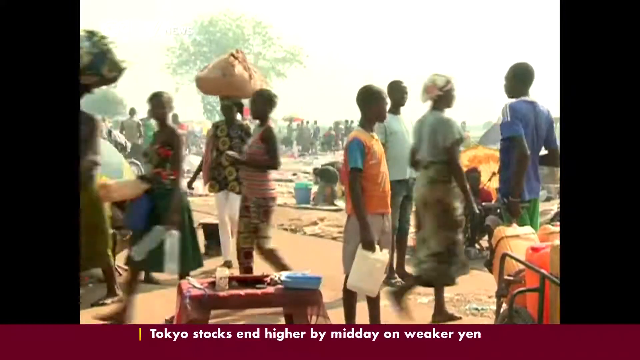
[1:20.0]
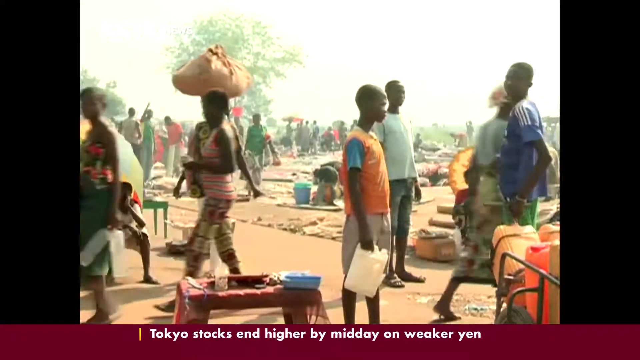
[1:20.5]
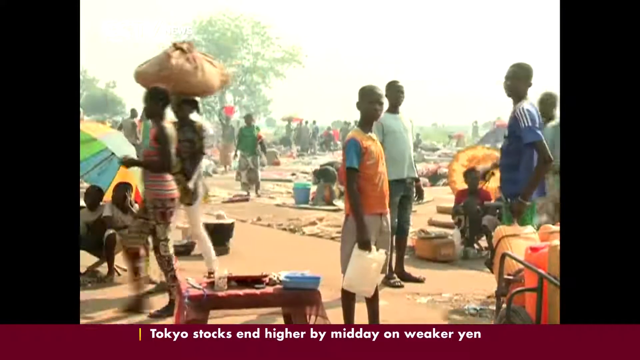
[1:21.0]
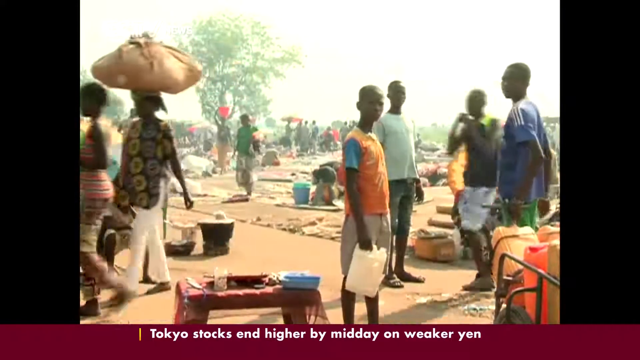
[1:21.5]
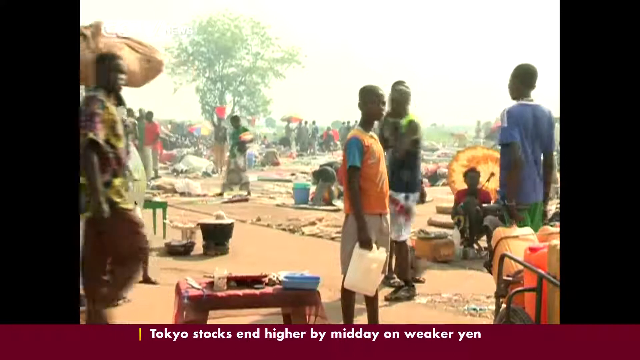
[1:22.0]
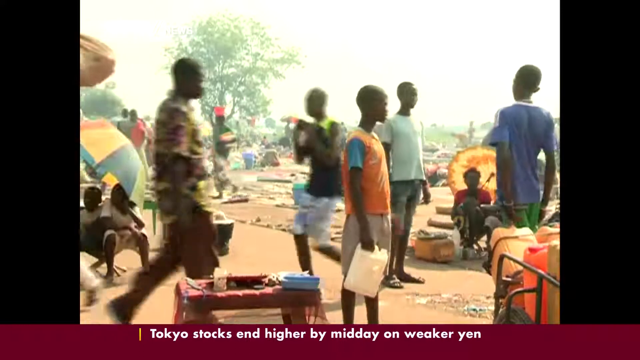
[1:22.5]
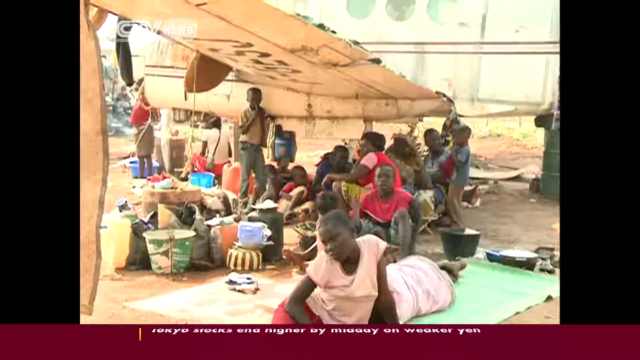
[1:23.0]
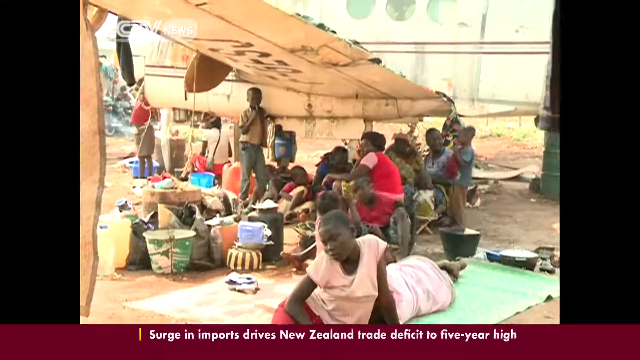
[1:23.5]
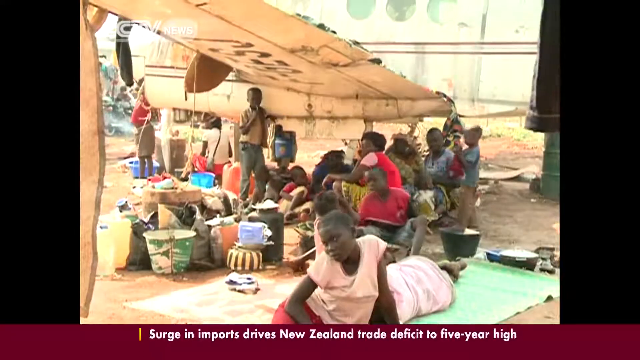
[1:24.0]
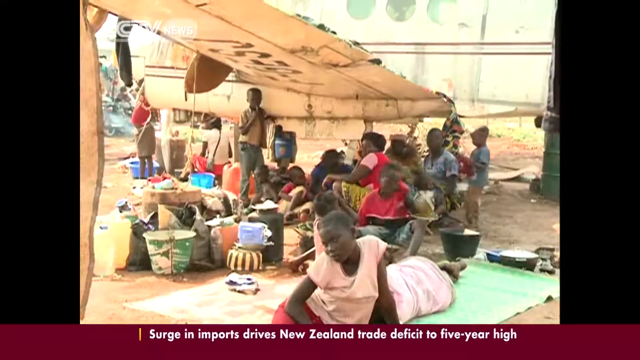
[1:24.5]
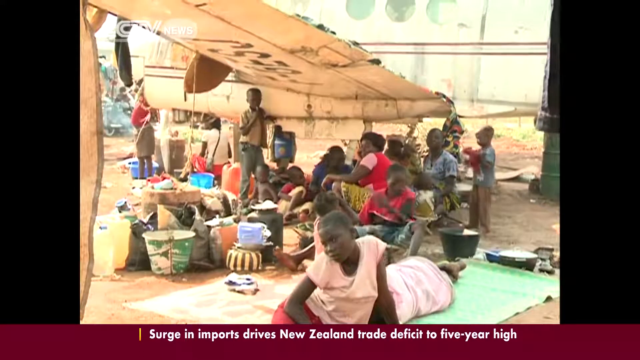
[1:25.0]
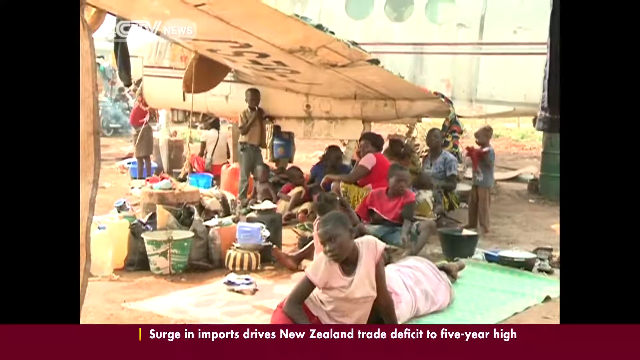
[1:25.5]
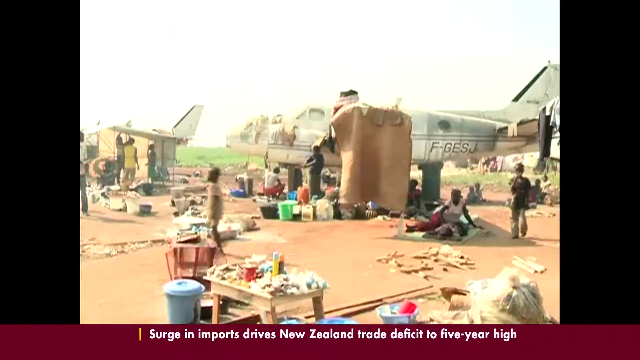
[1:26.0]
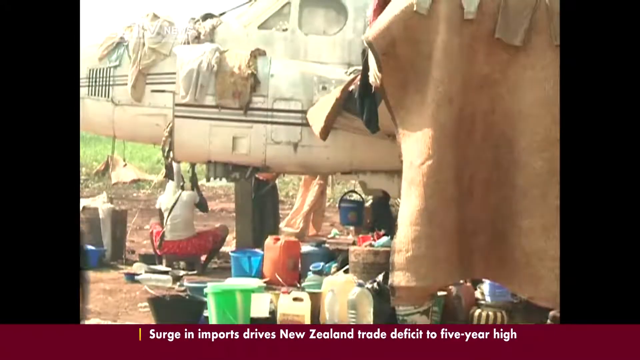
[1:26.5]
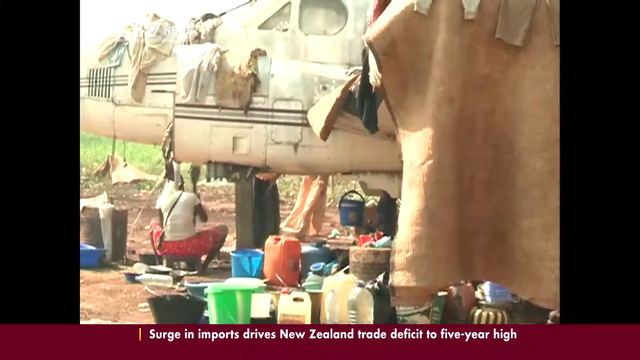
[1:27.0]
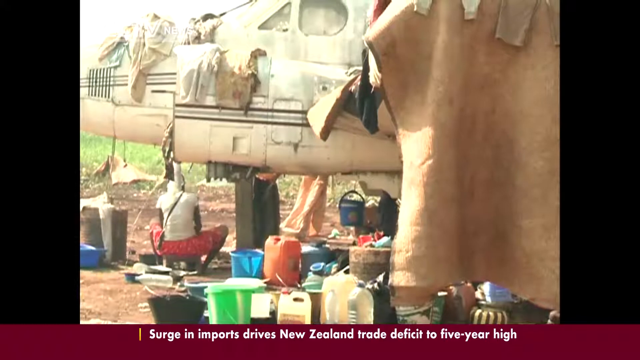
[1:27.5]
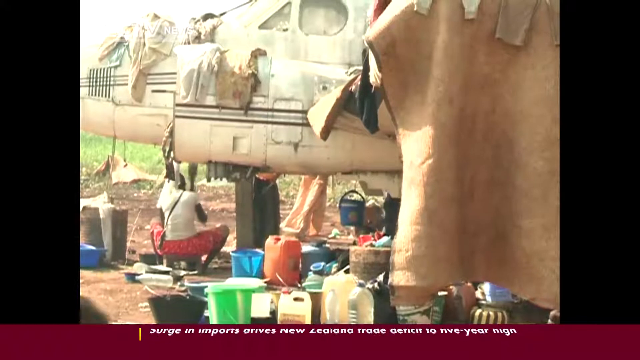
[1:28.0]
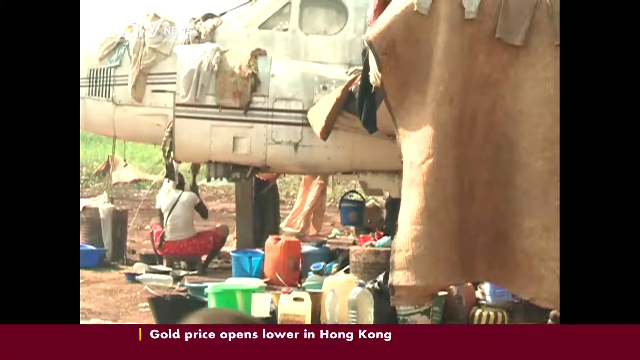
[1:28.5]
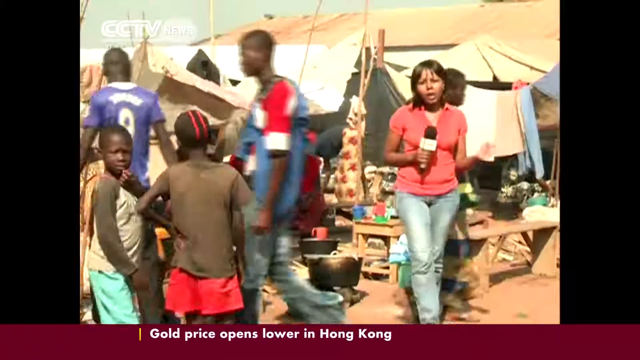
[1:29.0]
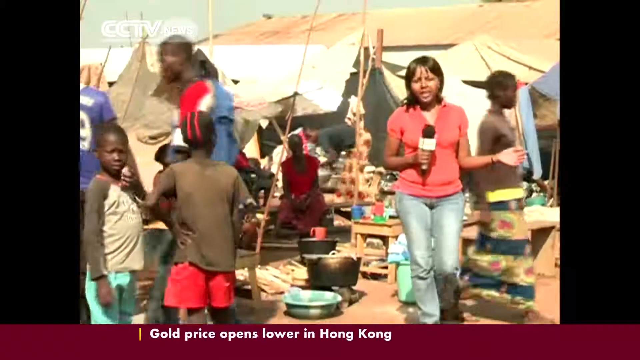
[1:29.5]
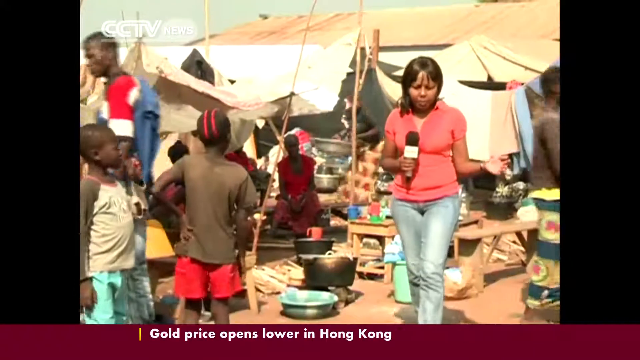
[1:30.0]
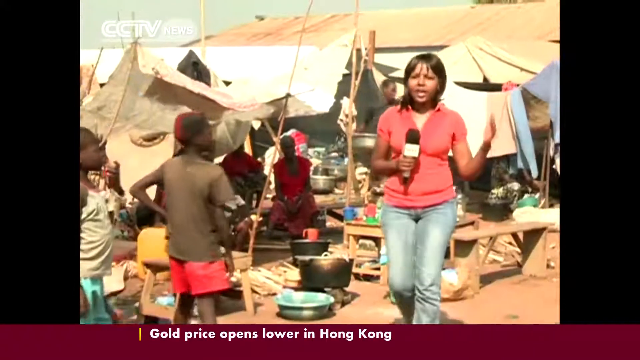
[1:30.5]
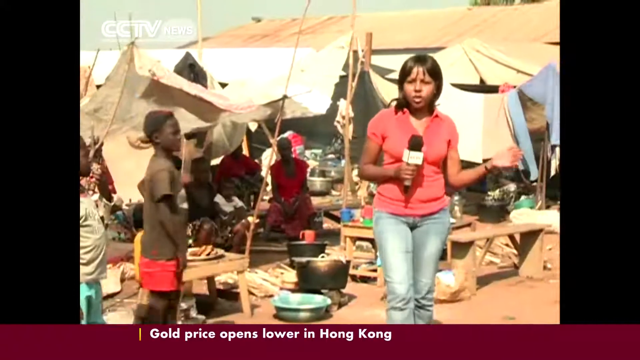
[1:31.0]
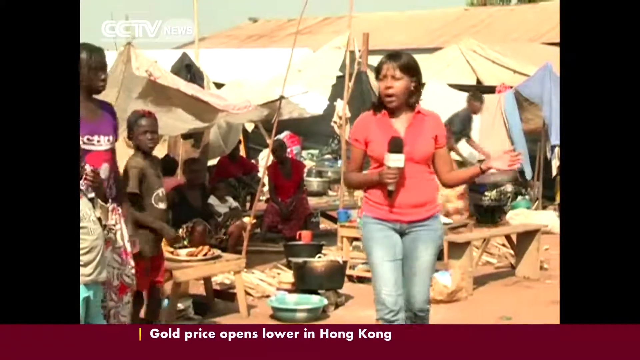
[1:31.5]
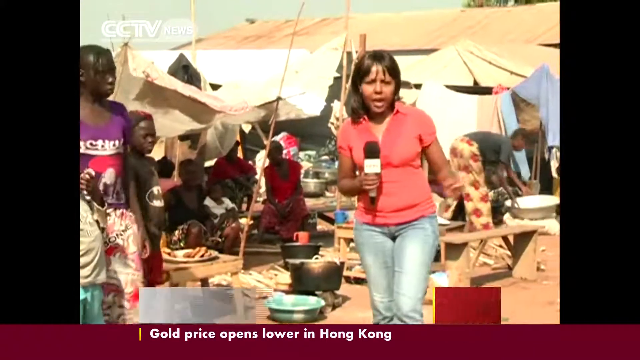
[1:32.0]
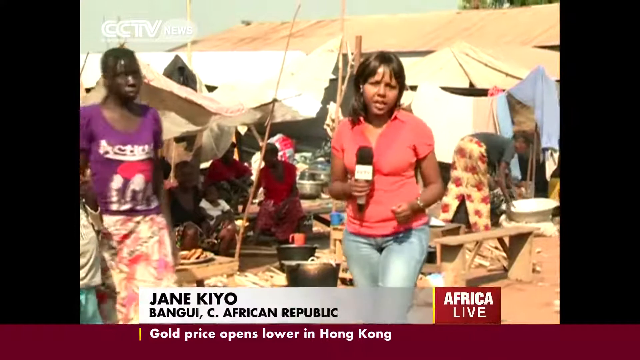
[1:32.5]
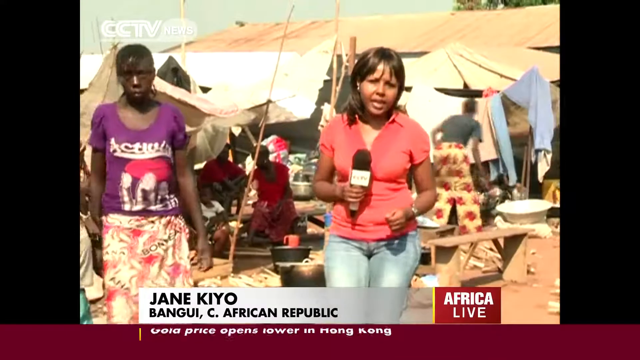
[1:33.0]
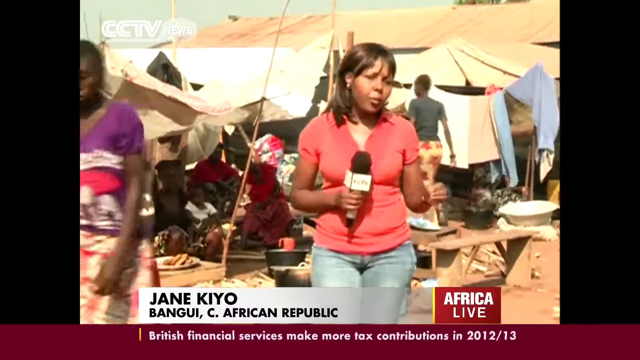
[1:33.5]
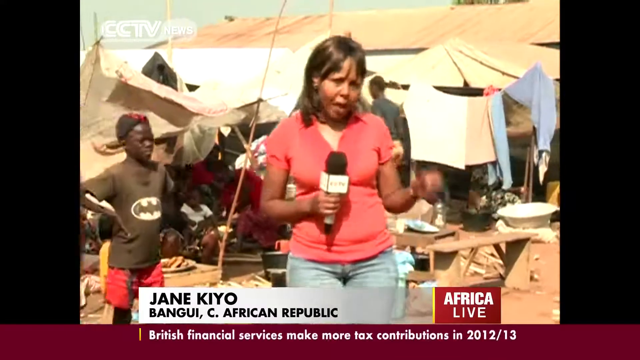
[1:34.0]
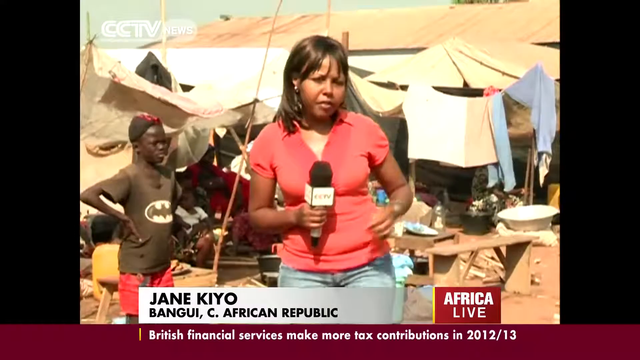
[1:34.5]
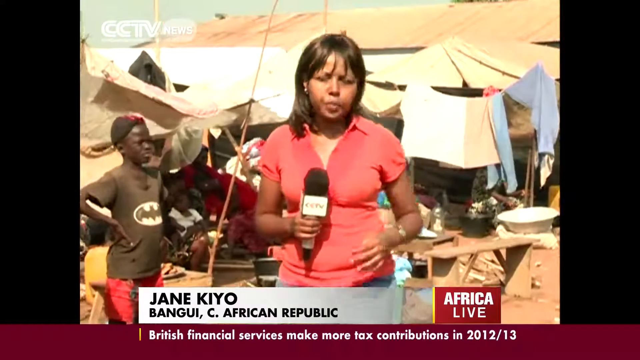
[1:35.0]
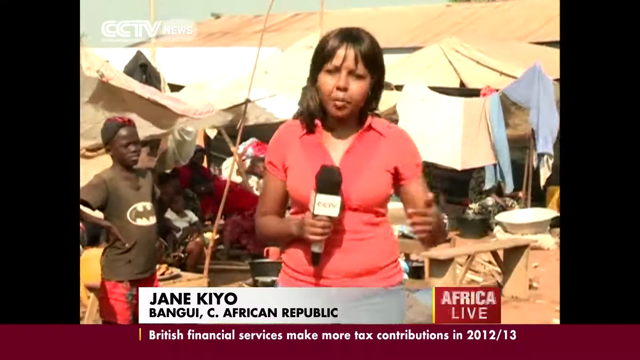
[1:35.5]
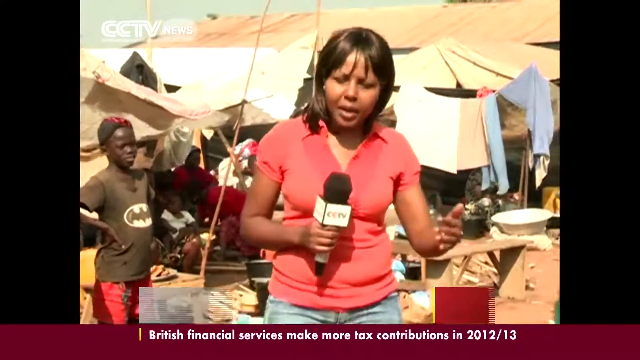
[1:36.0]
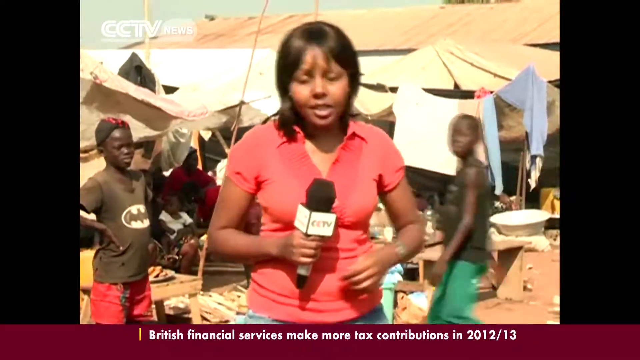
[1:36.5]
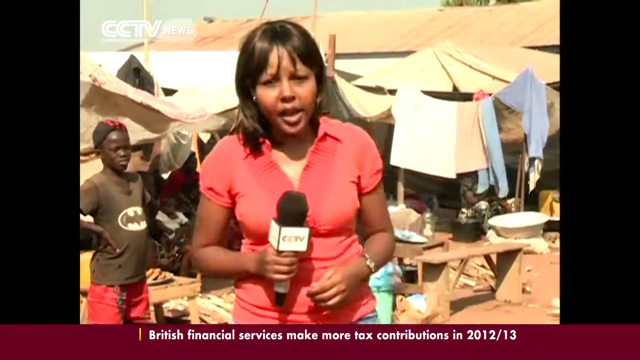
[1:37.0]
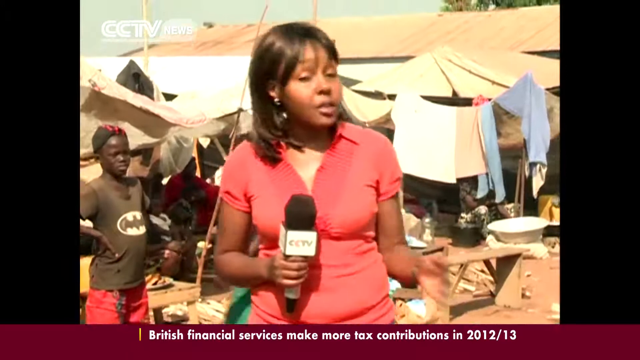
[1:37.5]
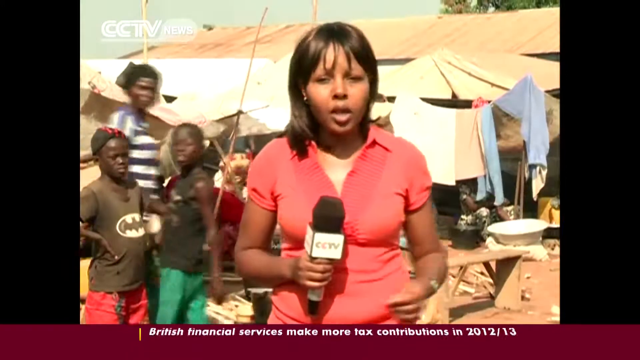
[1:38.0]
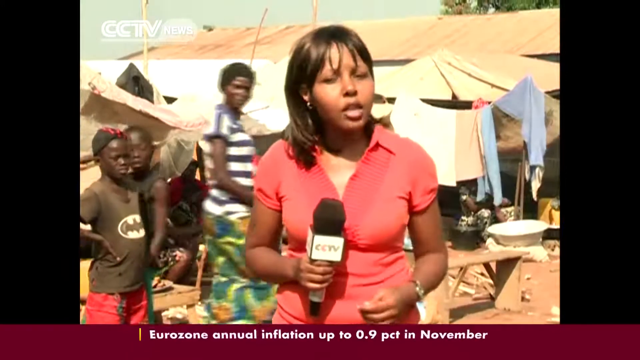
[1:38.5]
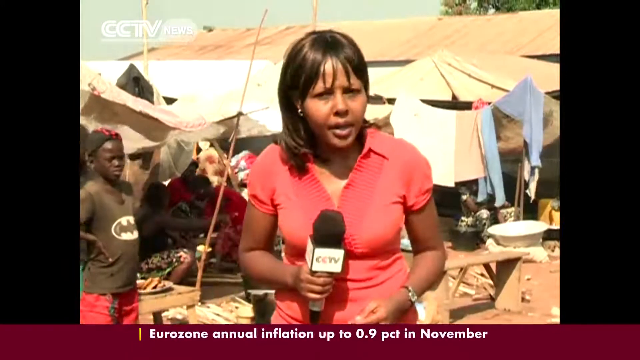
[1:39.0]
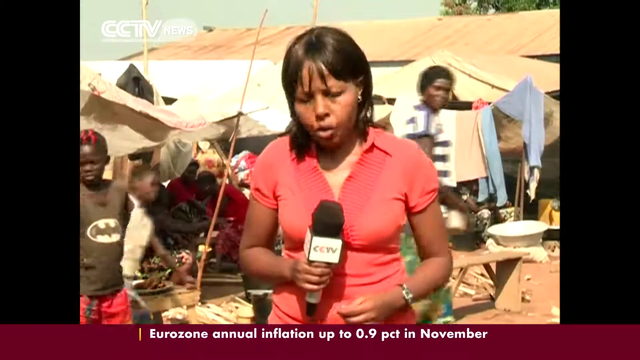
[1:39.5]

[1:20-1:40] An exterior shot shows people walking in a busy, somewhat wide-open area, with various spots where people sit and gather. In another area, people appear to be sitting under the wing of a plane, which seems to provide some relief from the heat or sun. Another shot of the plane shows what looks like clothes hanging from it and bottles underneath it, and someone appears to be stirring something. A news reporter in an orange top and jeans holds a microphone in the right hand and walks through the camp, speaking and gesturing with the left hand. Text gives the name as "Jane Kiyo." The reporter keeps gesturing animatedly with the left hand while getting closer to the camera, and people at the camp stop to watch her speak.